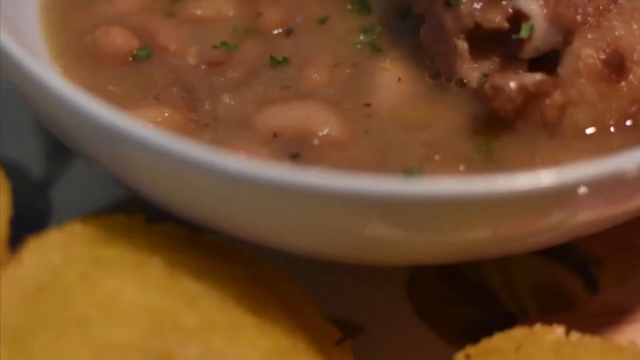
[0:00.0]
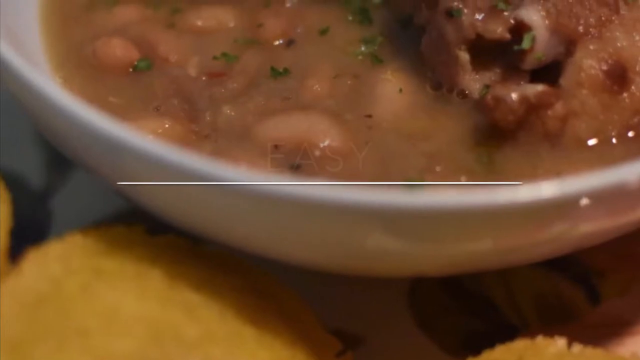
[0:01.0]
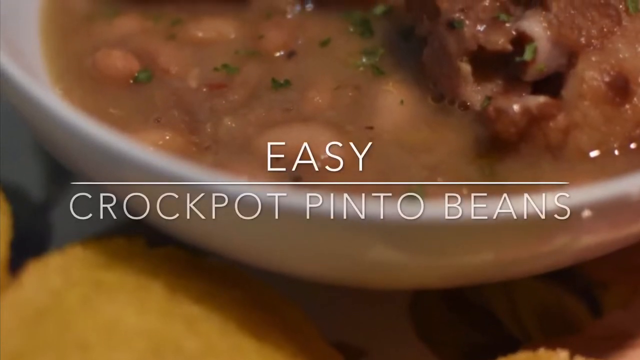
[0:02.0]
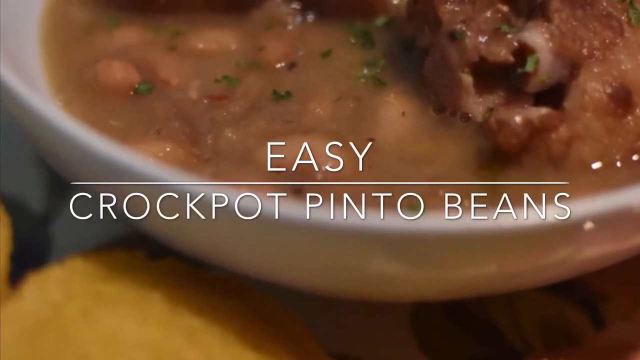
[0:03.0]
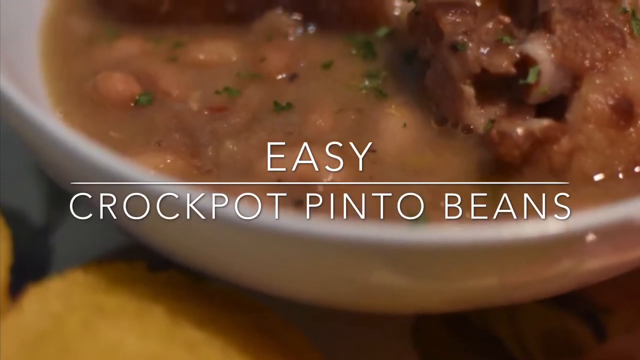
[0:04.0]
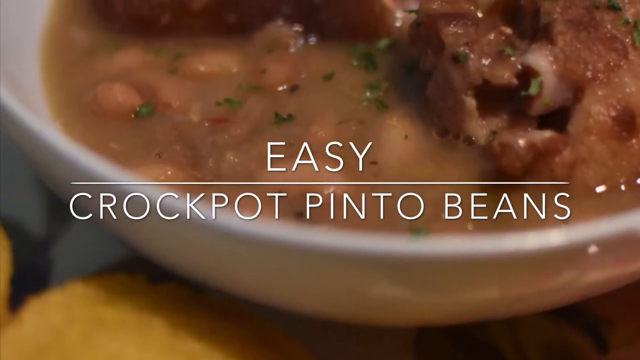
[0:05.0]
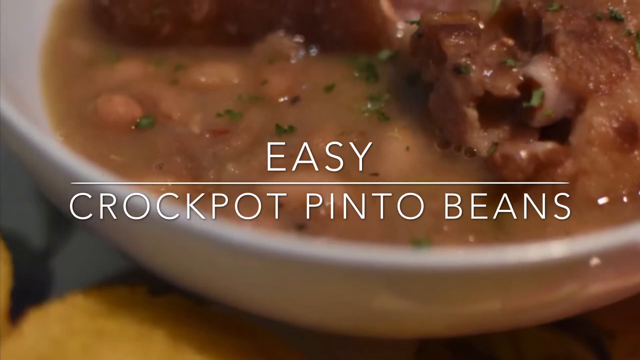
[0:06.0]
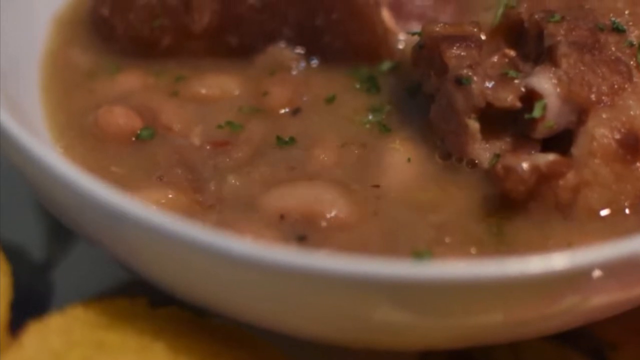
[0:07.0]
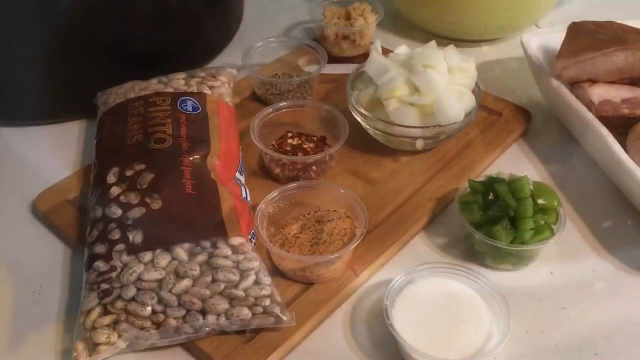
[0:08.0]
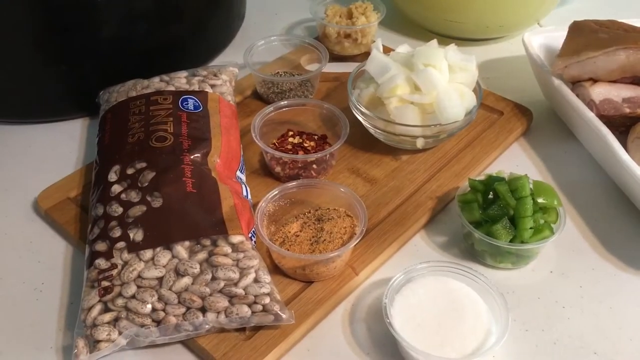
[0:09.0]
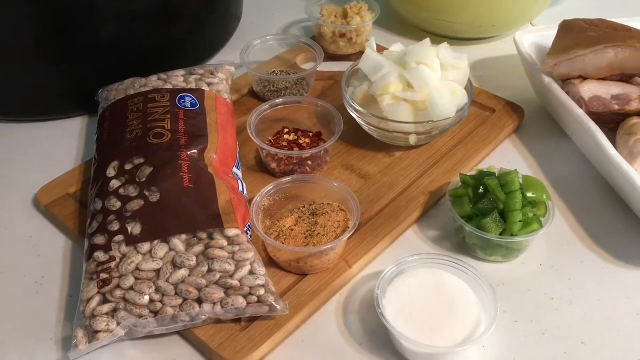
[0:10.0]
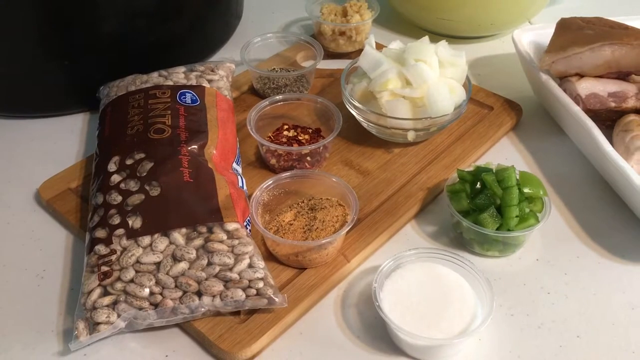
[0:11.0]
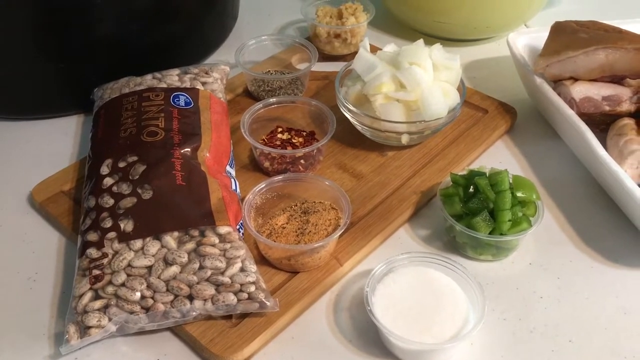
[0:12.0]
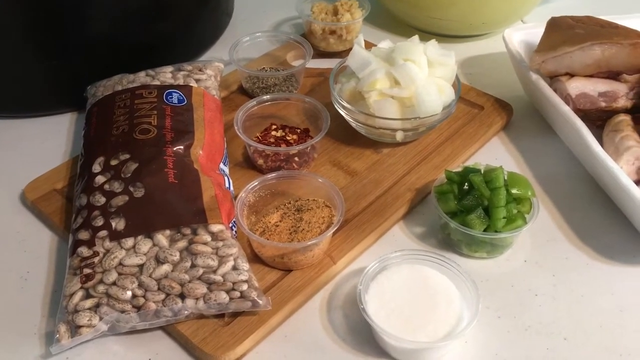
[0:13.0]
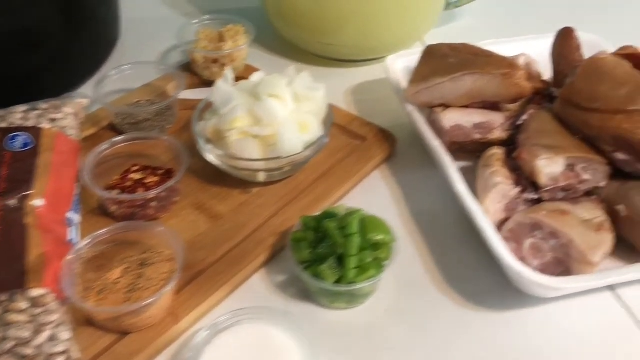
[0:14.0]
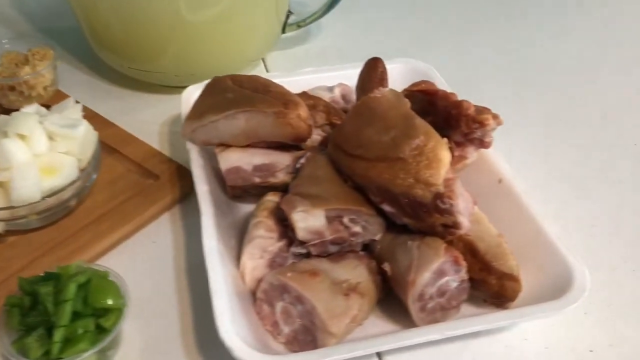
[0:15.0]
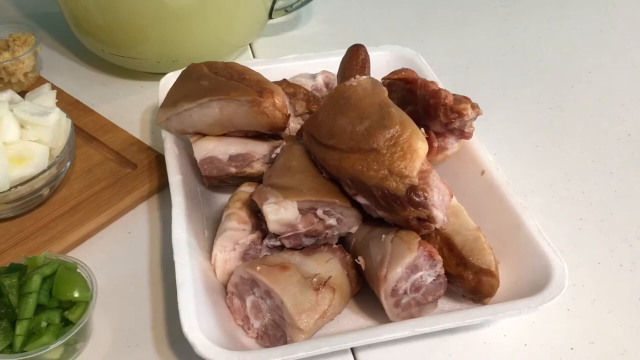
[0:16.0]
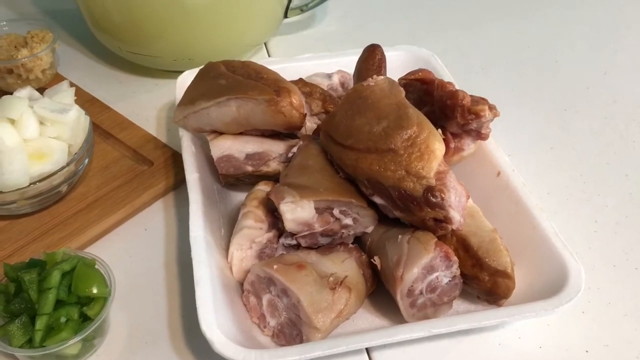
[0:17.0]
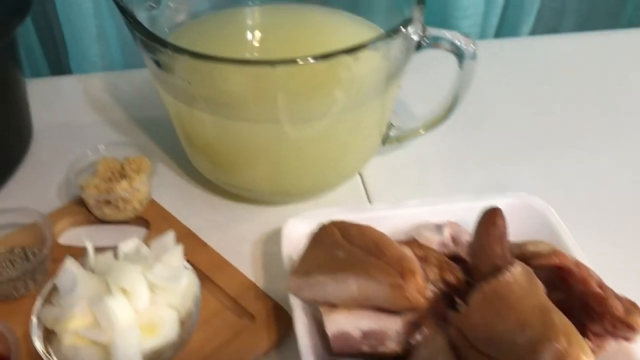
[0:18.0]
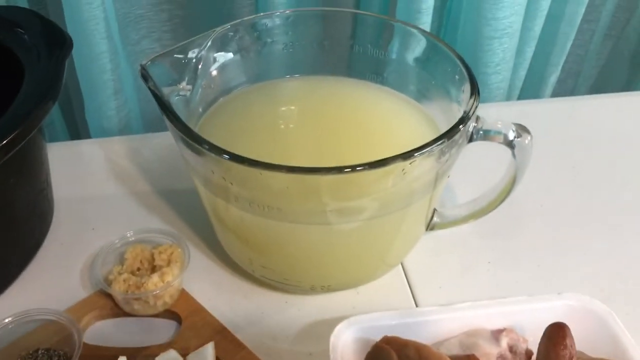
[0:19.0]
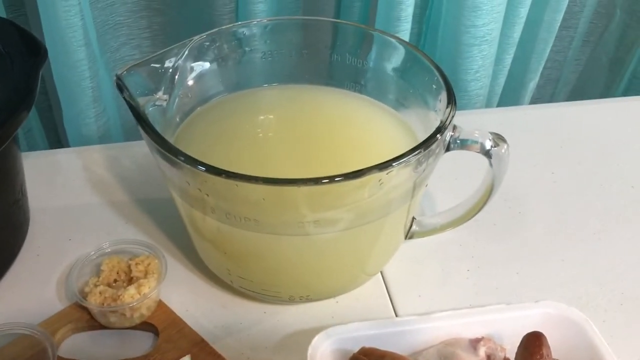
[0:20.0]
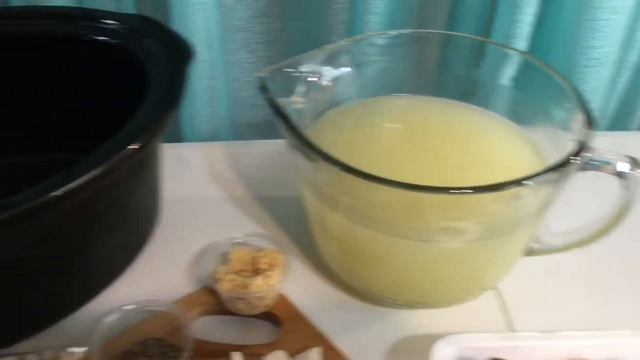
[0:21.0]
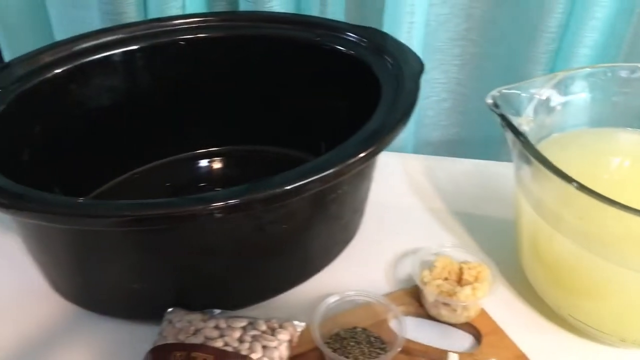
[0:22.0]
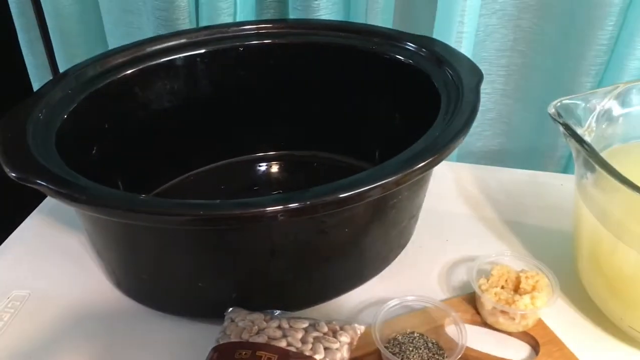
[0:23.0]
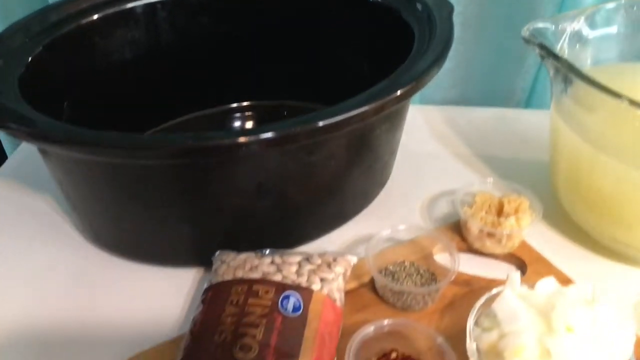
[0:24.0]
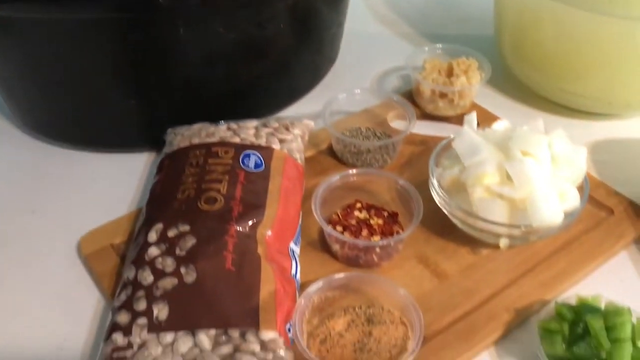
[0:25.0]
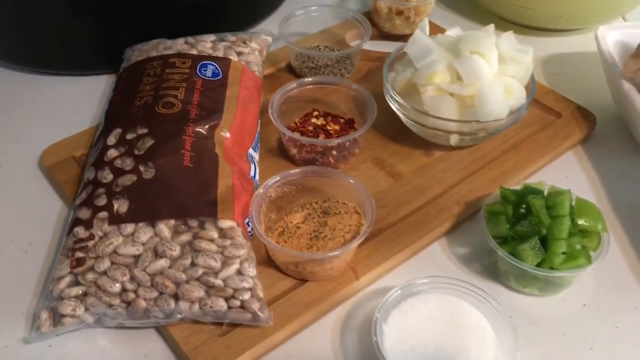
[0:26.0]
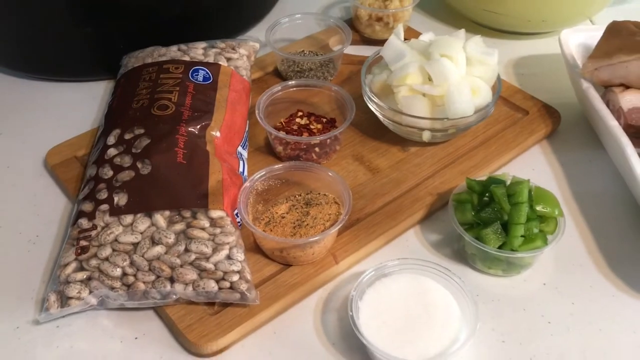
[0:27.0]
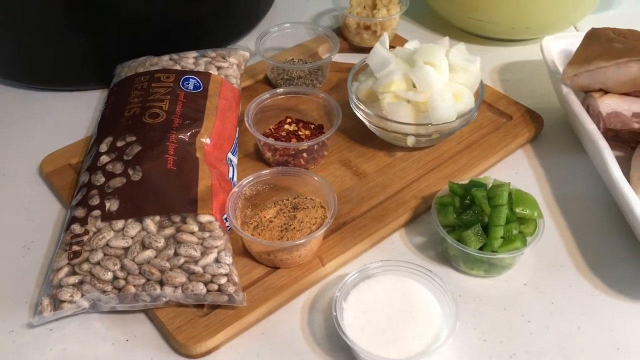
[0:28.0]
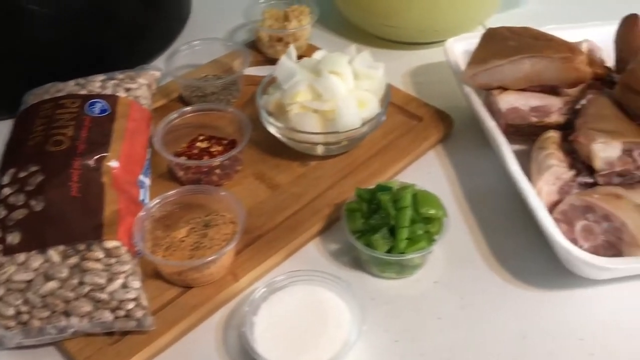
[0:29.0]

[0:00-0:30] A big bean soup is in a wide bowl with meat dipped inside. In the kitchen, ingredients are placed on the kitchen cabinet: pinto beans, green peas, and spring onions in a bowl, with the meat and the other ingredients in a small bowl. There is also a big jar in the kitchen.